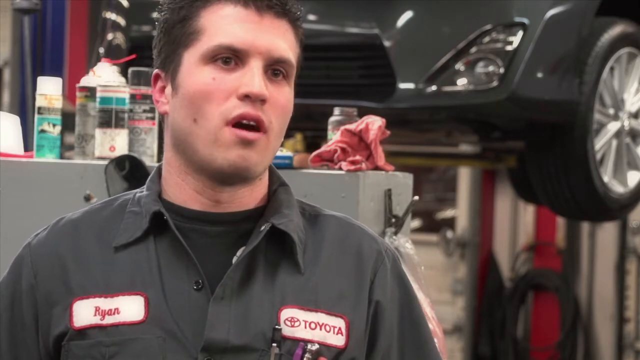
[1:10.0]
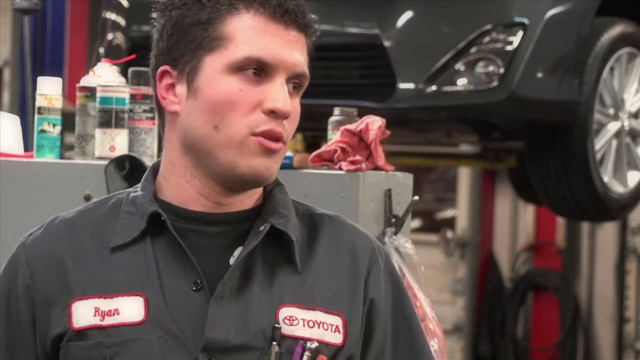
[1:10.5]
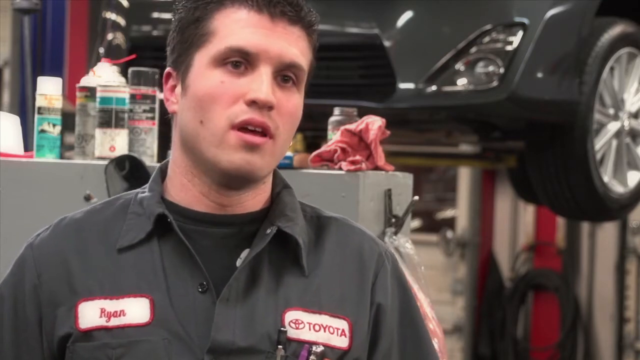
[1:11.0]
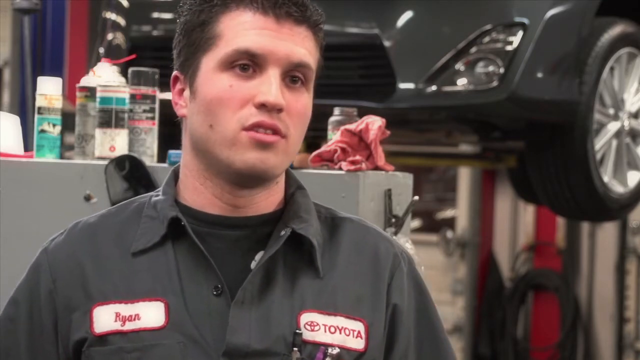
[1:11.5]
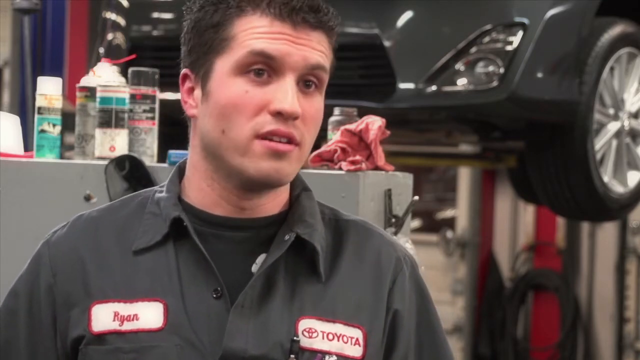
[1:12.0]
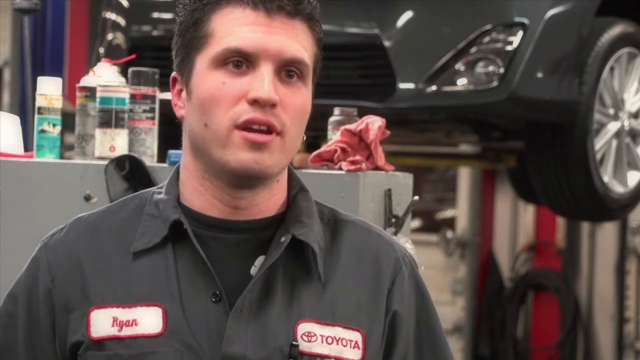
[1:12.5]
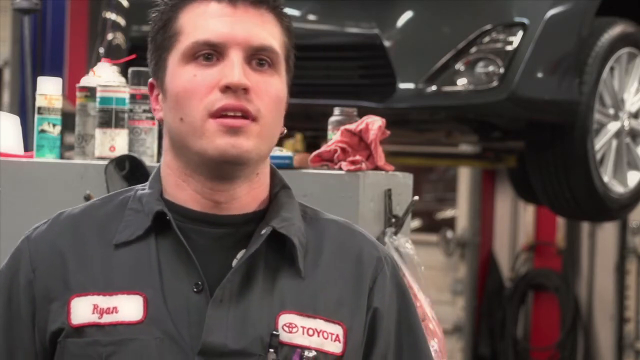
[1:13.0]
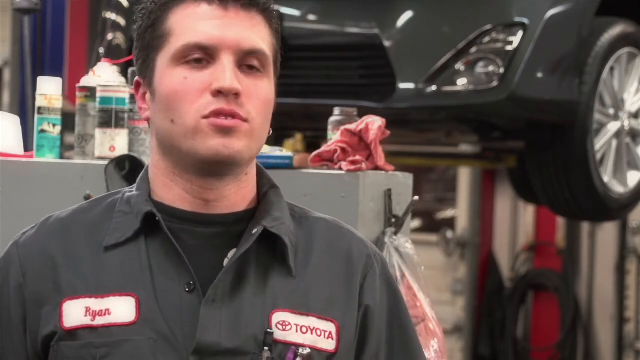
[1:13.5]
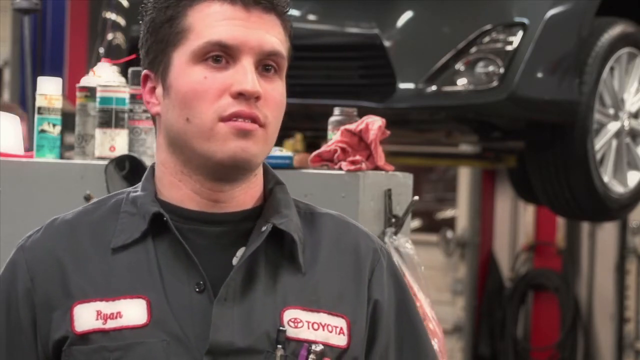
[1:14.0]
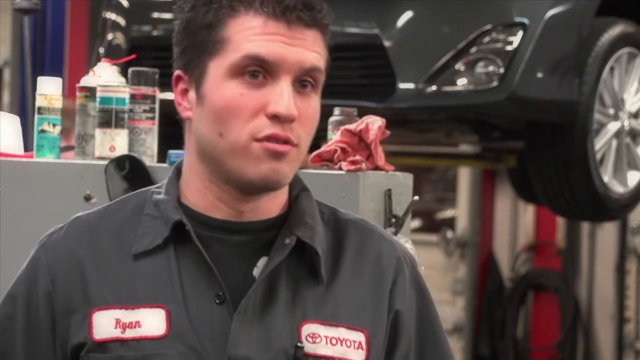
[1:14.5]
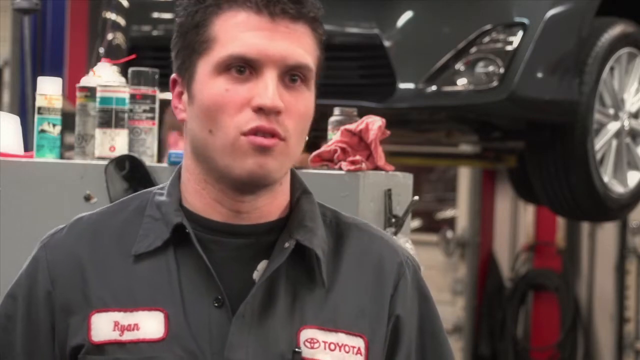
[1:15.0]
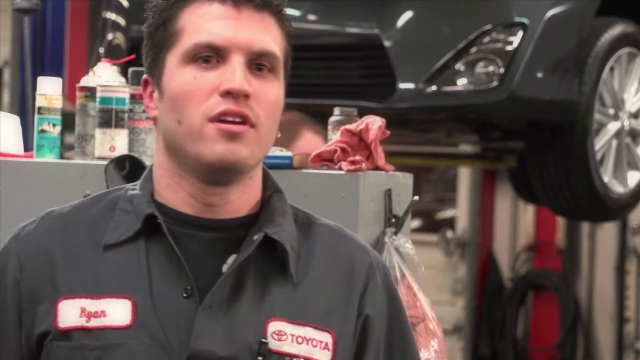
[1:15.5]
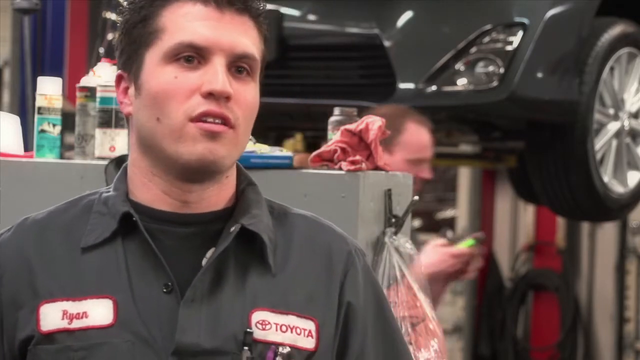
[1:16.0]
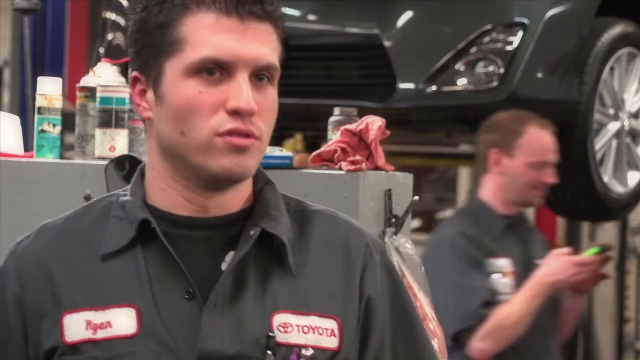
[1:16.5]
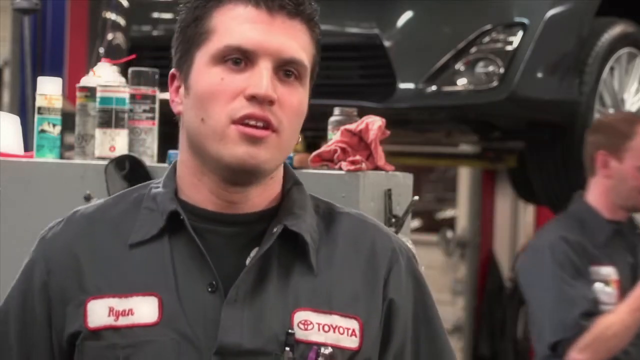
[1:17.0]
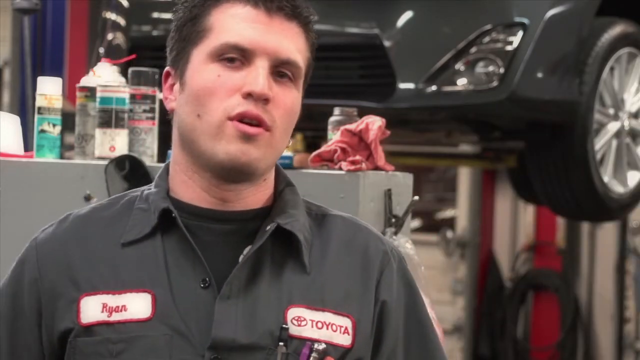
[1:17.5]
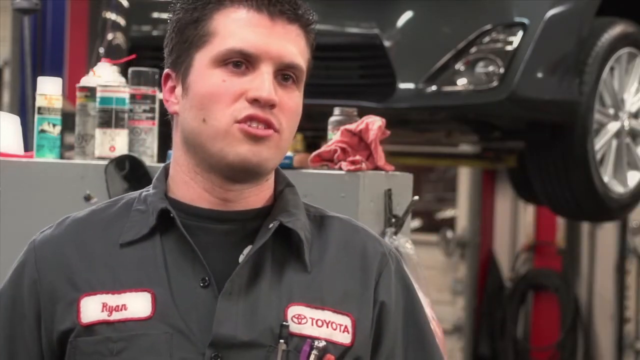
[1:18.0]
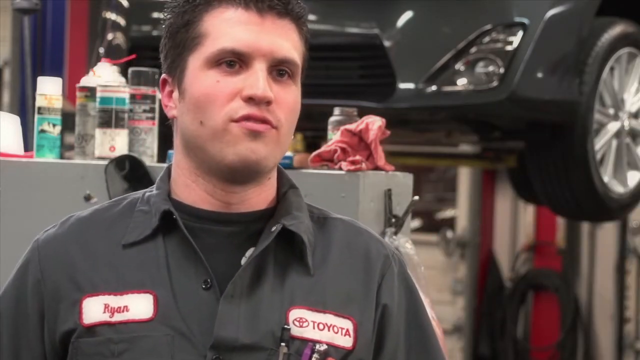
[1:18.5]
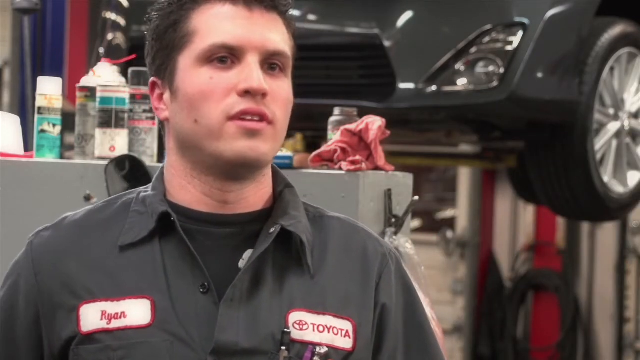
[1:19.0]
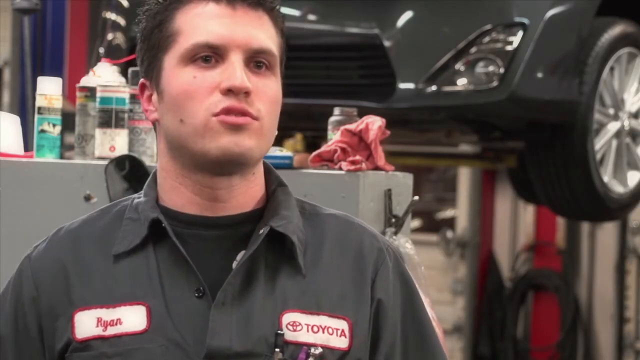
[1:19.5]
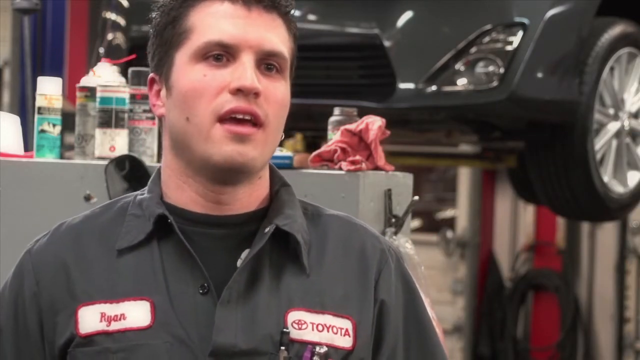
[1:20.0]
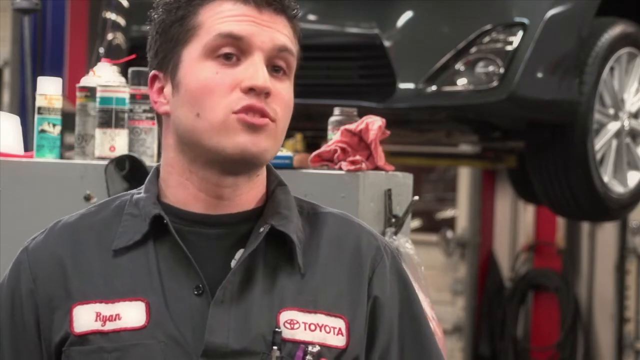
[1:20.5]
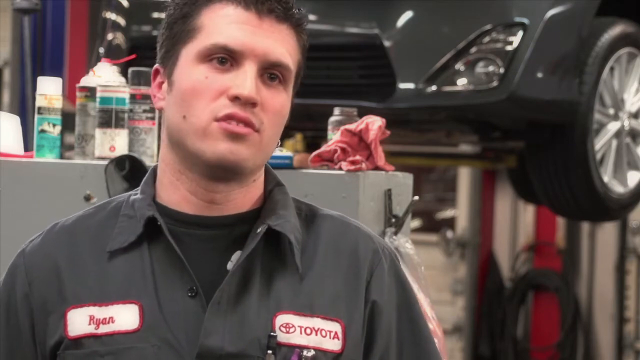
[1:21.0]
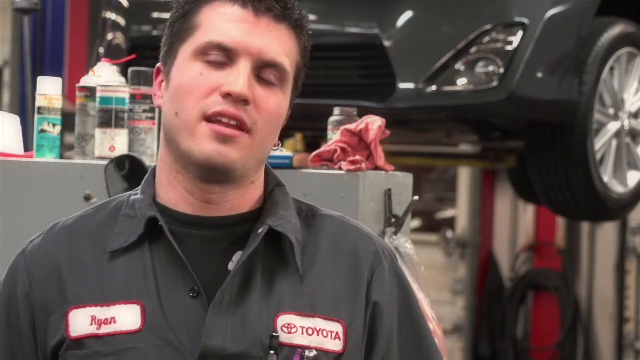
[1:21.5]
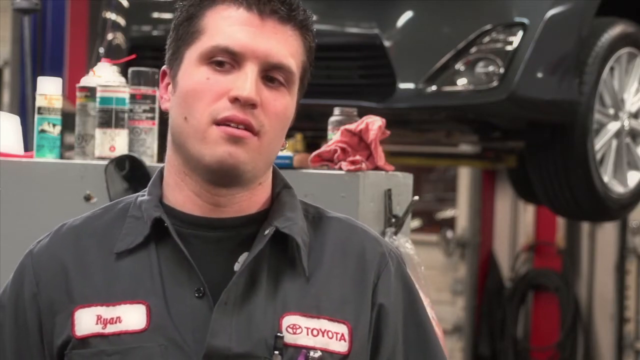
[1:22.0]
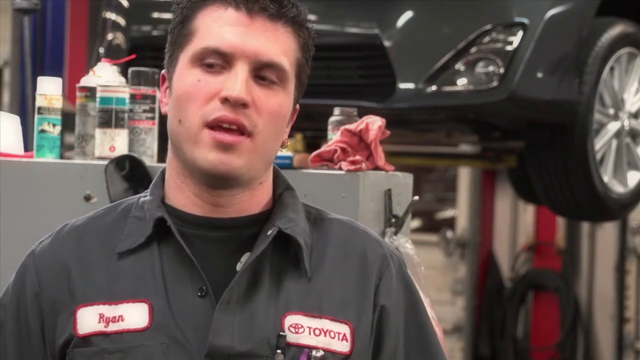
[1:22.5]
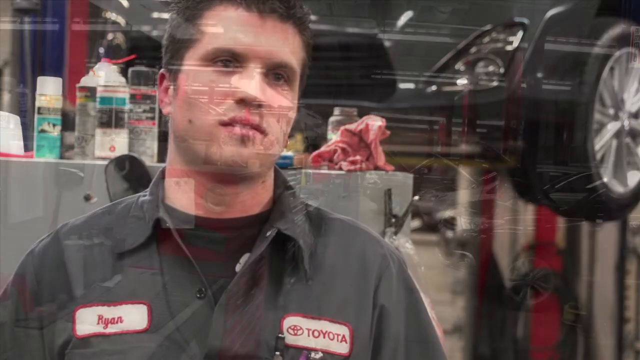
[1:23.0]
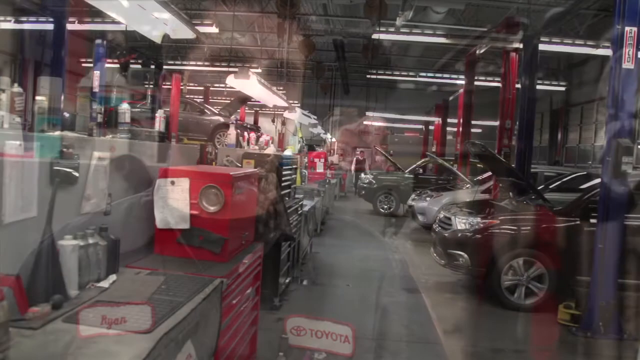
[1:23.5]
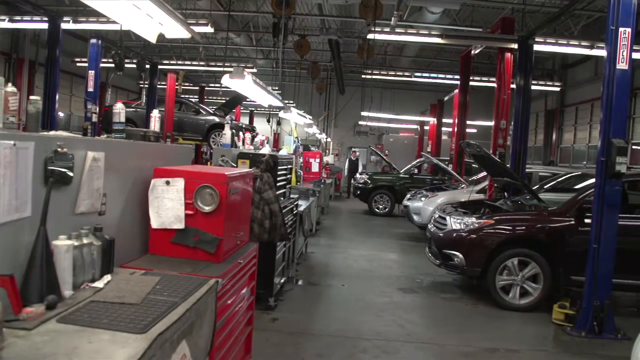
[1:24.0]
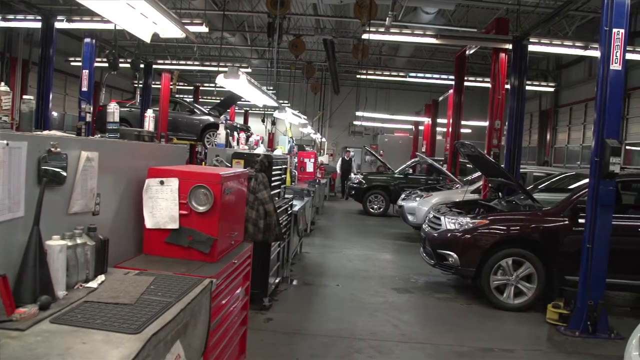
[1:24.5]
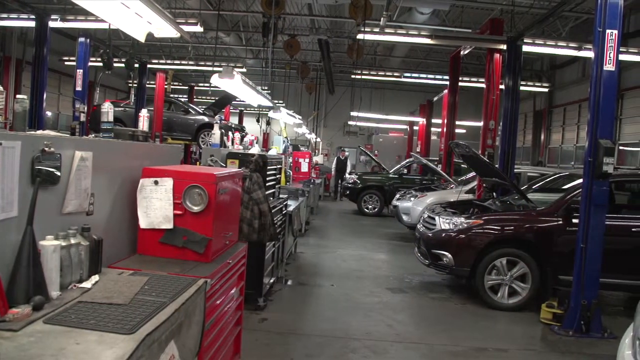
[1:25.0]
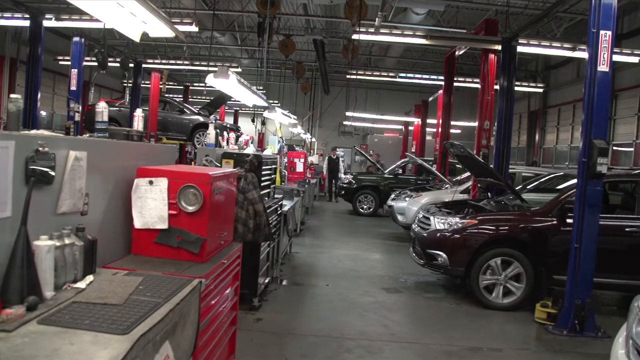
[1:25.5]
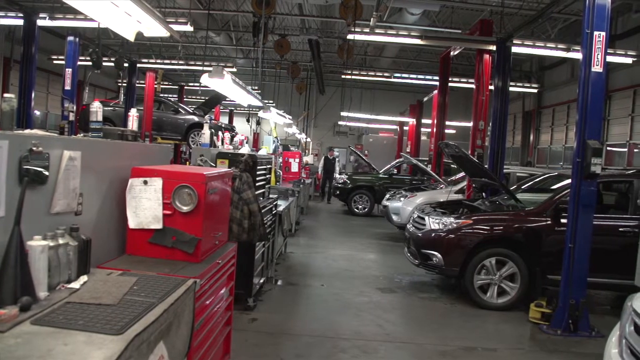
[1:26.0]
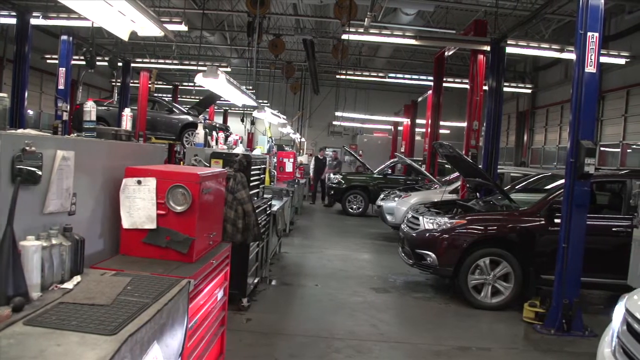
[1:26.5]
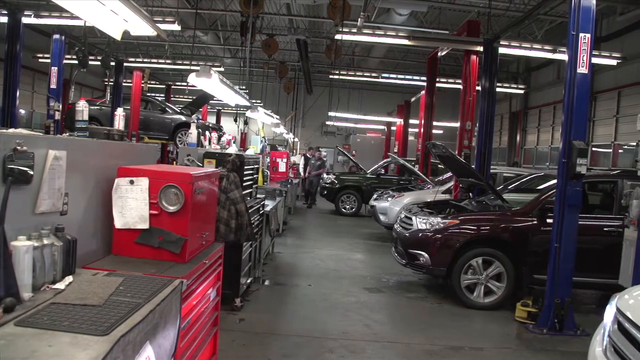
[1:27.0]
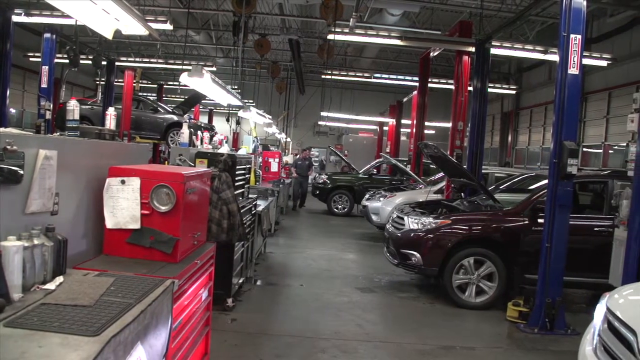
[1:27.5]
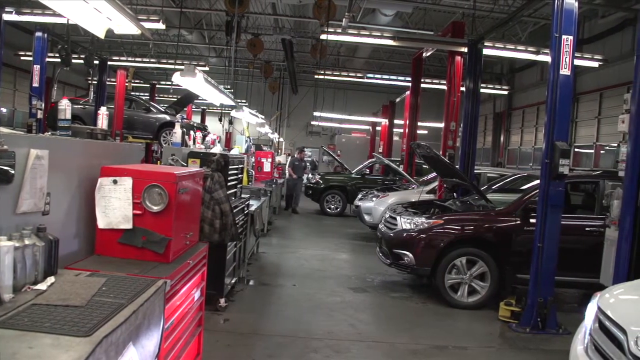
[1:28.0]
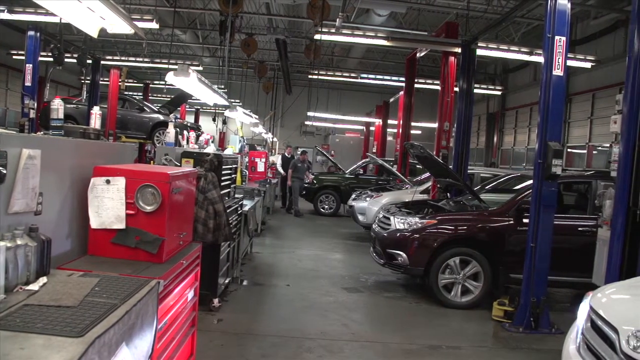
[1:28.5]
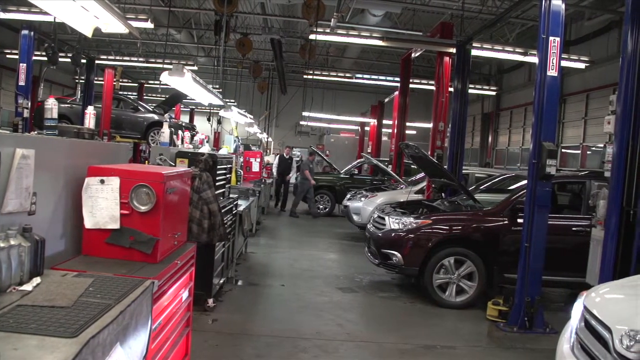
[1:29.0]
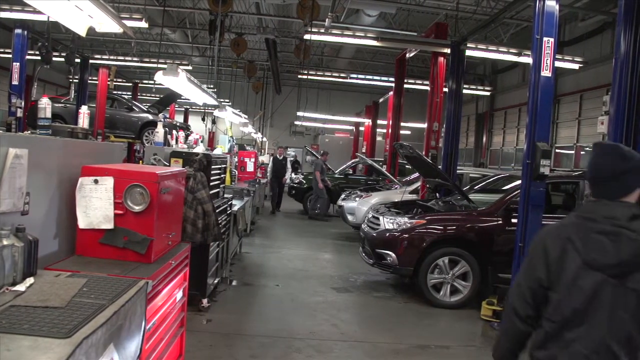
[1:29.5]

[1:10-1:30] Ryan, wearing his gray shirt over a black t-shirt, stands in the car shop talking to the camera as he is interviewed. He stands in front of a small block holding bottles, spray bottles and a red towel on top of it. Behind it, a large black vehicle, presumably a Toyota, is elevated off the ground. While he talks, another worker walks past in the background using their phone. The video then cuts to a moving shot of the work area, where three cars, all larger SUV-type vehicles, are in their own sections with their hoods open, and multiple workers walk around the area going to their respective vehicles.